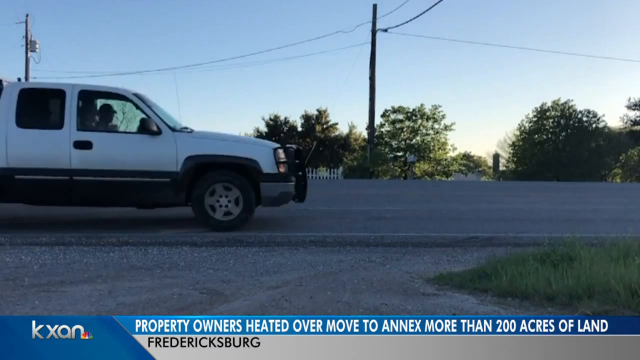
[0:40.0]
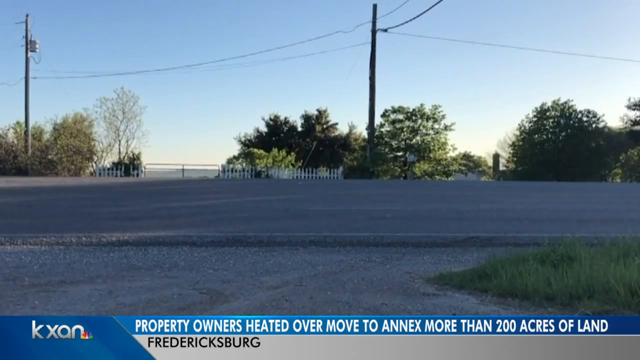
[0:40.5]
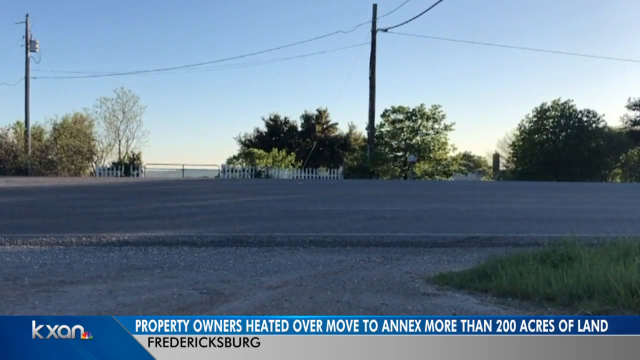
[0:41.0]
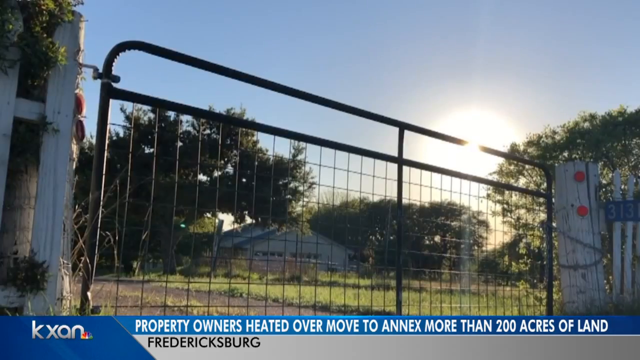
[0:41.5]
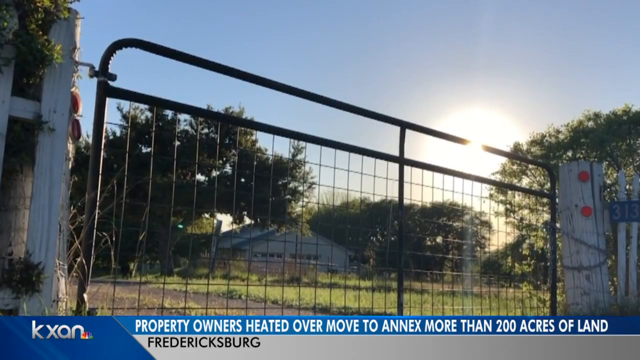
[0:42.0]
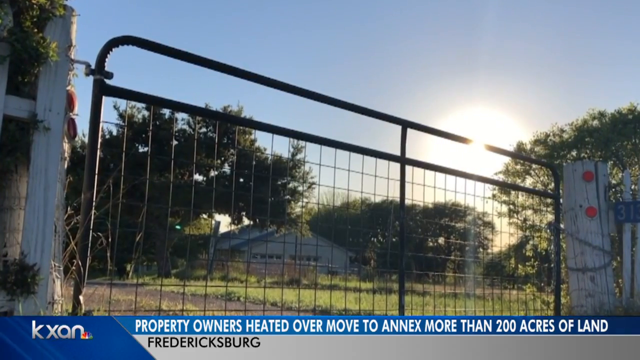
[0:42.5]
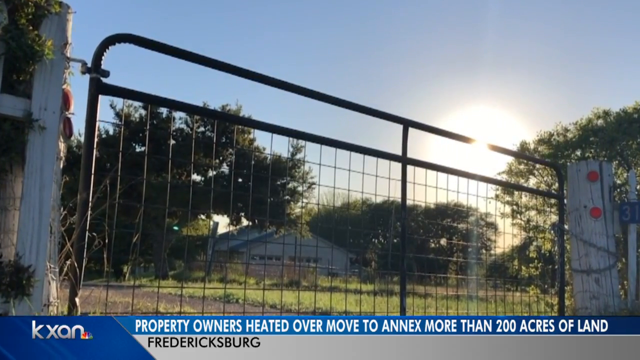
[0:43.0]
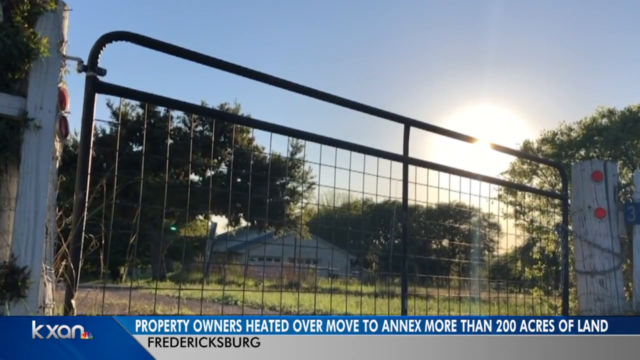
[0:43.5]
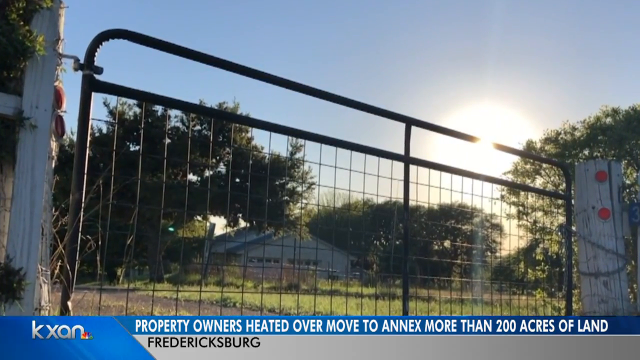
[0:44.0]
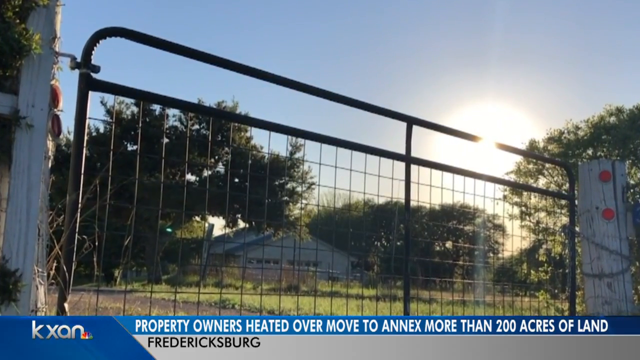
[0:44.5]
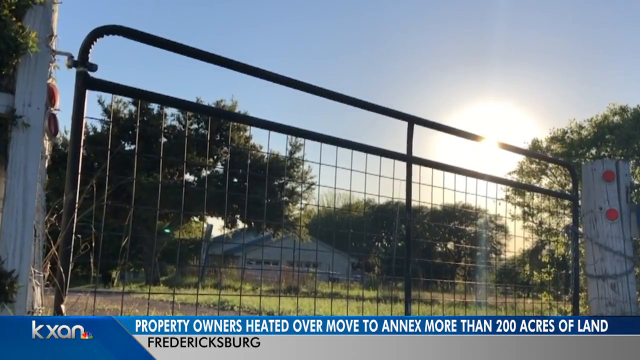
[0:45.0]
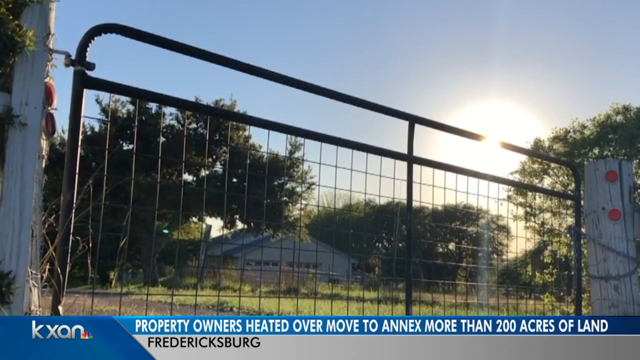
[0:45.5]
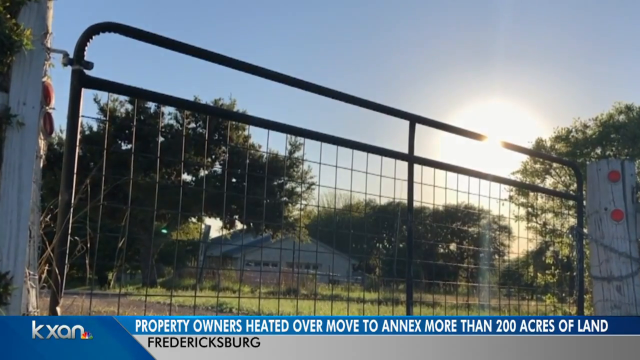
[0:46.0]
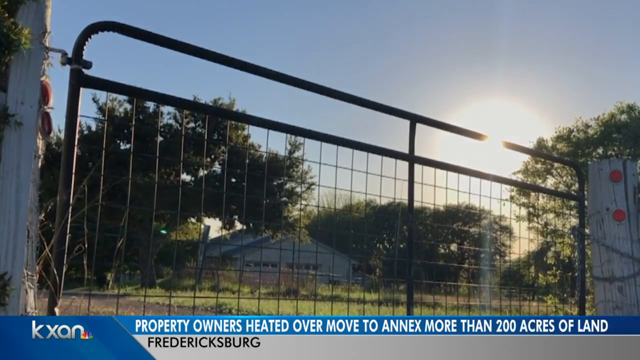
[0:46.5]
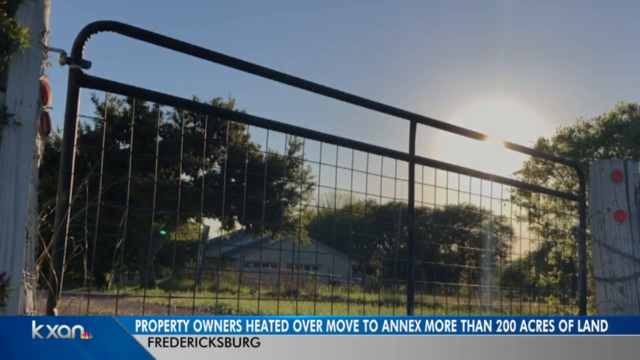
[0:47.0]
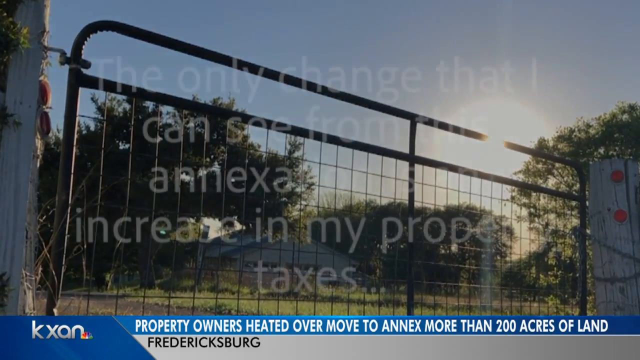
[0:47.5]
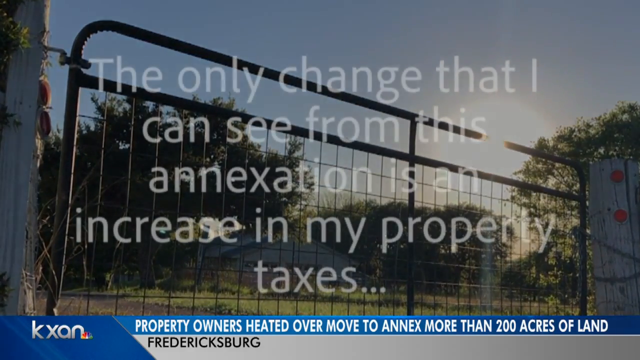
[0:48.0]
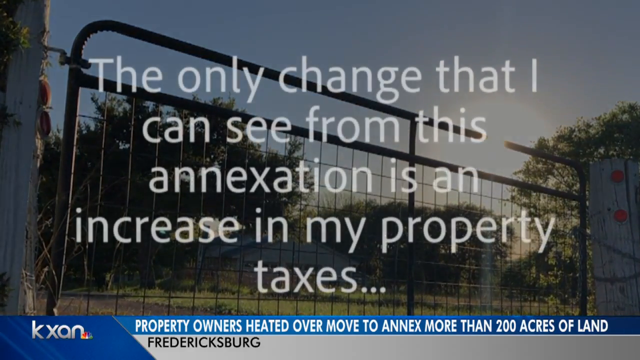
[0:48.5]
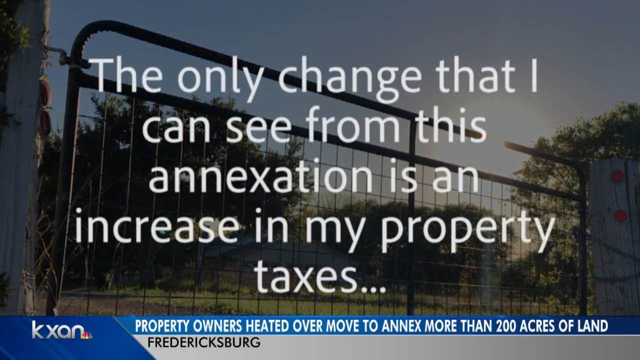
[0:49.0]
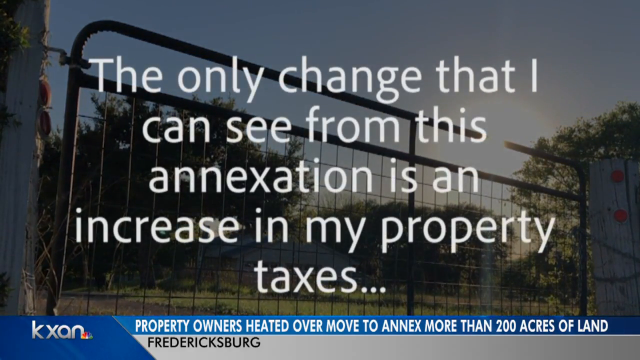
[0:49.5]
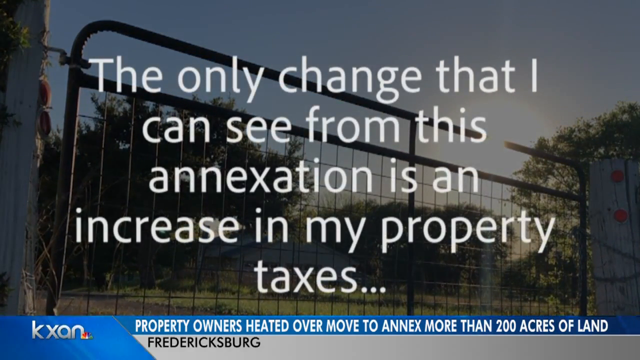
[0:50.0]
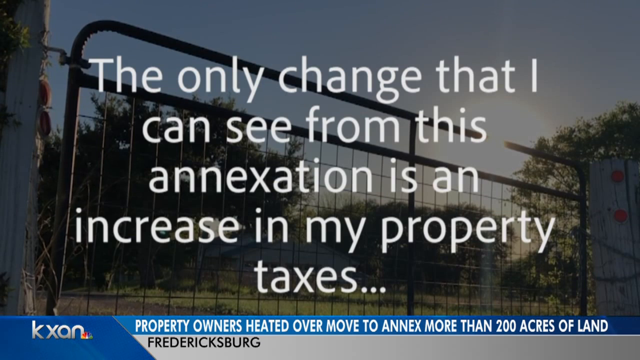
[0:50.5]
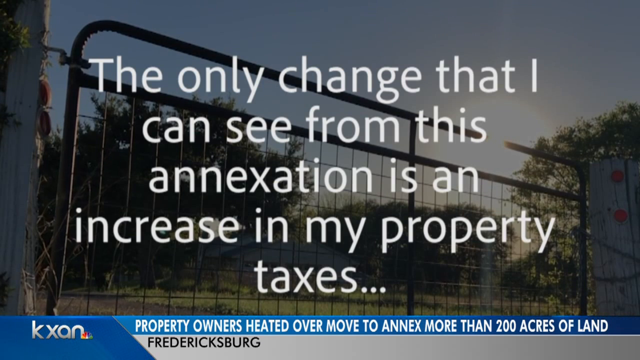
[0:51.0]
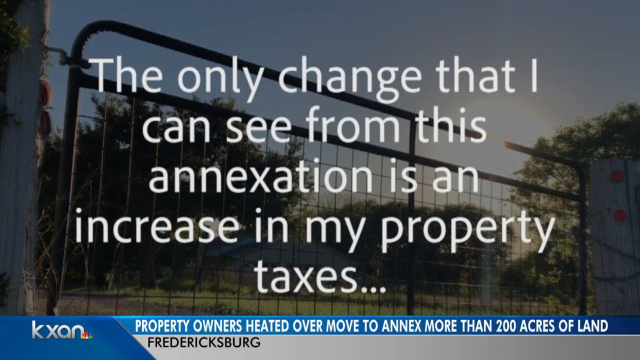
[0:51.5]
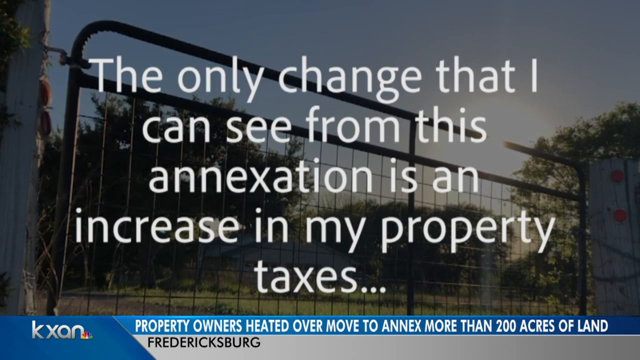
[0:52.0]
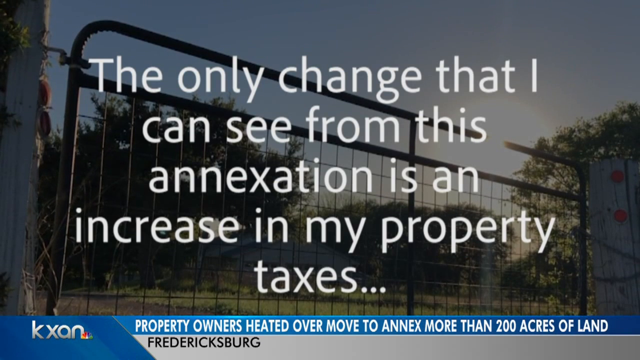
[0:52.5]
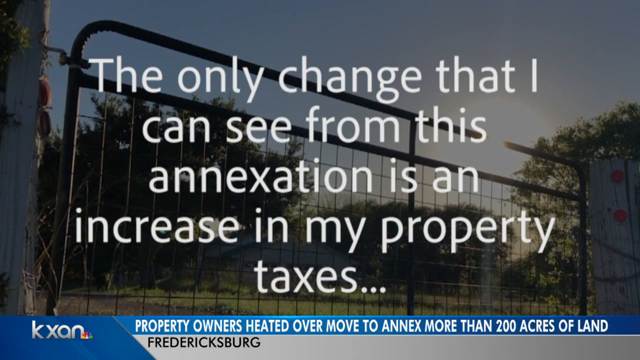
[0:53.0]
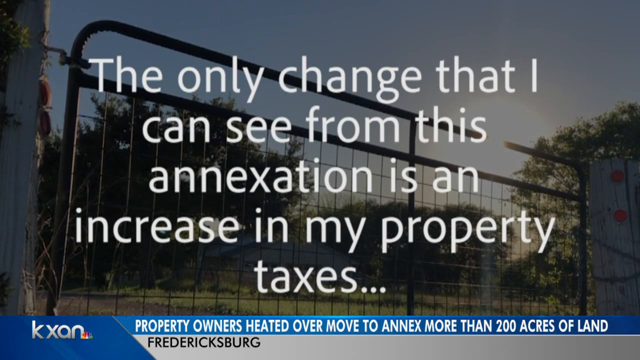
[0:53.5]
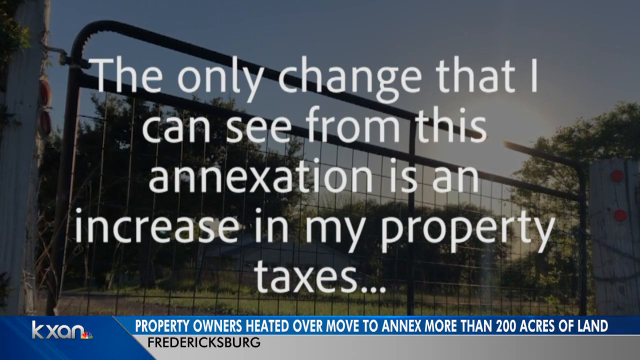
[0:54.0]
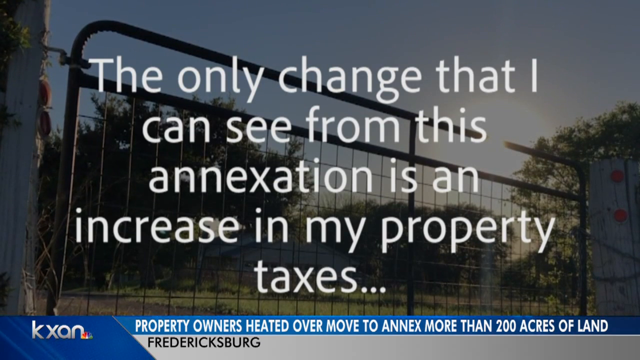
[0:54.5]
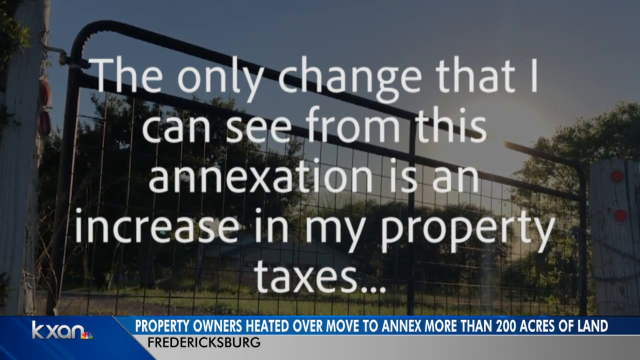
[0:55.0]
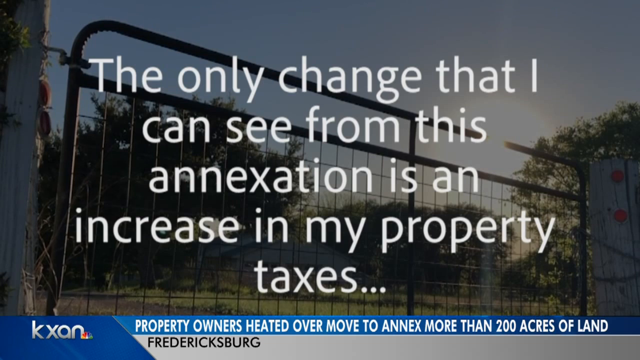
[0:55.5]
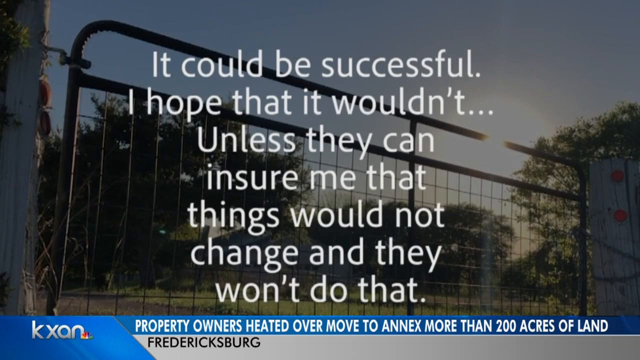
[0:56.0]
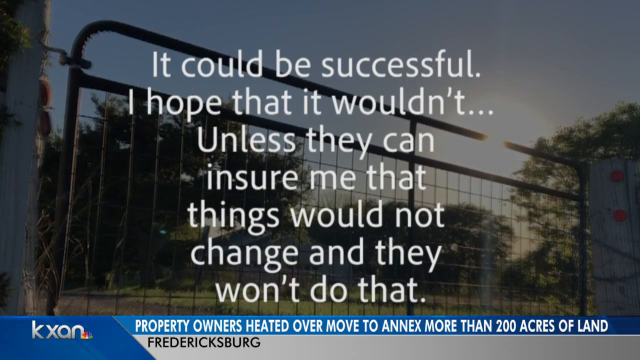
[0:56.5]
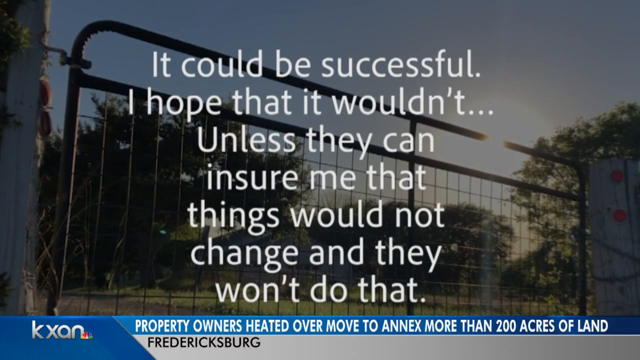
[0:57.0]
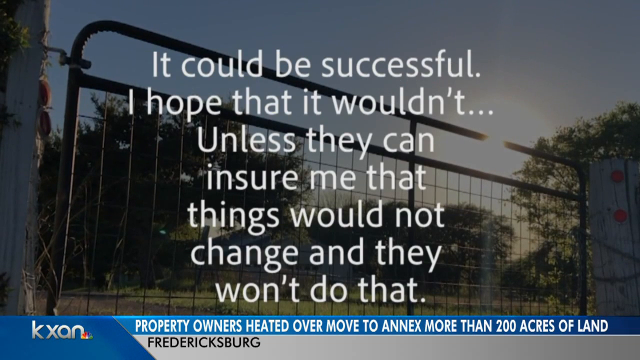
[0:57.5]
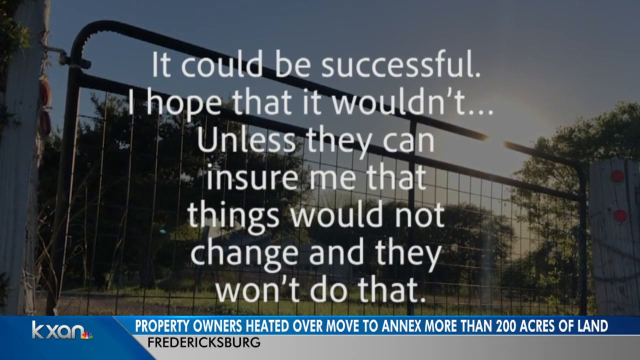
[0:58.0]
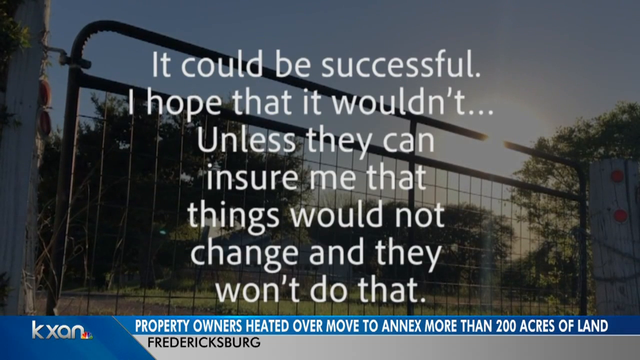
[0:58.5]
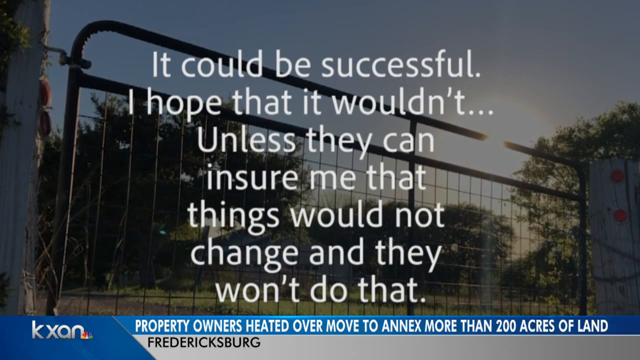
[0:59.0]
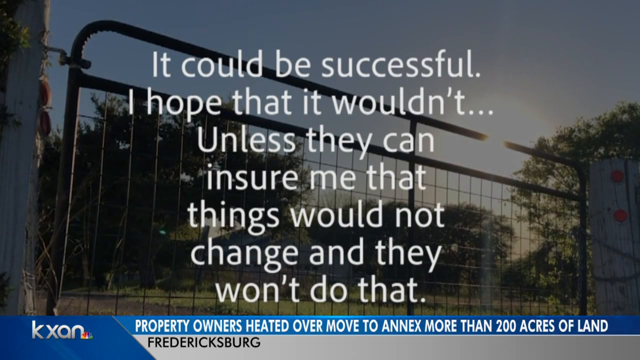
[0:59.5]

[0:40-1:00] Text at the bottom of the screen reads "property owners heated over move to annex more than 200 acres of land Fredericksburg." A gate appears with the sun behind it, with apparently a barn area behind the gate. Text in the middle of the screen reads "The only change that I can see from this annexation is an increase in my property taxes." The video then cuts to another quote: "it could be successful, I hope that it wouldn't unless they can ensure me that things would not change and they won't do that." The property looks to be a large barn painted white, with large trees around it in the farming area. A house is in the background.